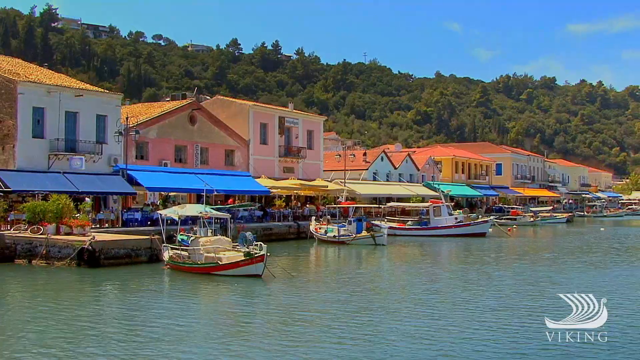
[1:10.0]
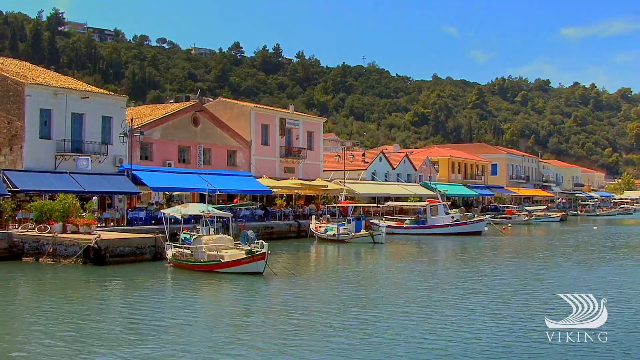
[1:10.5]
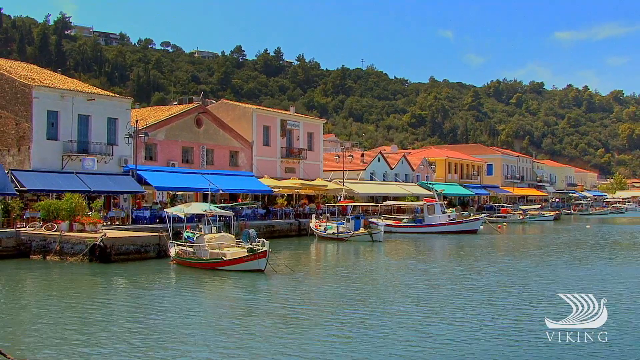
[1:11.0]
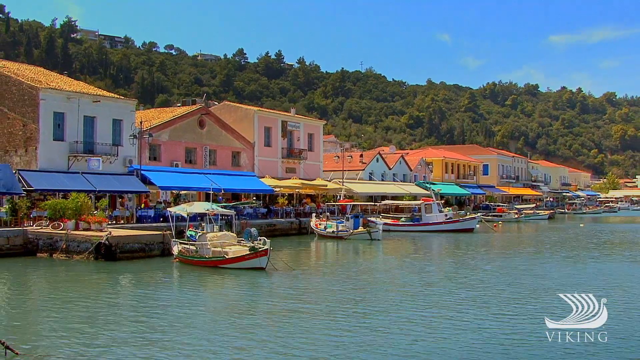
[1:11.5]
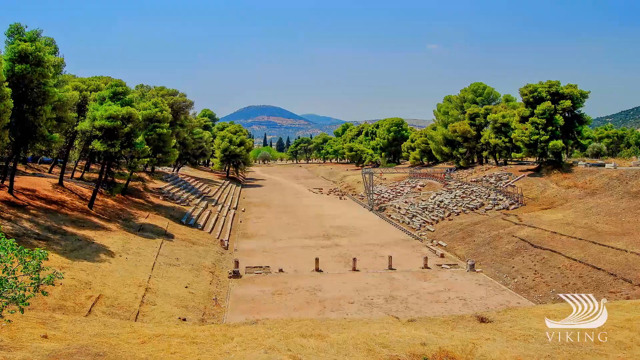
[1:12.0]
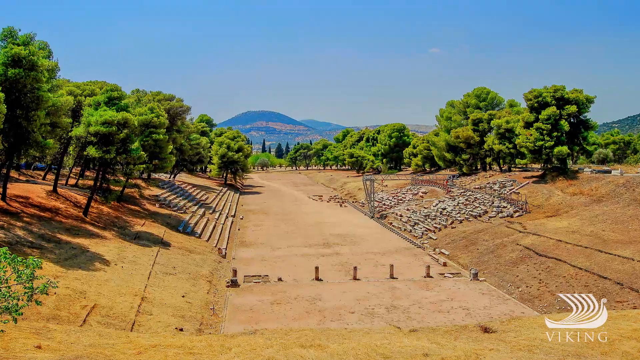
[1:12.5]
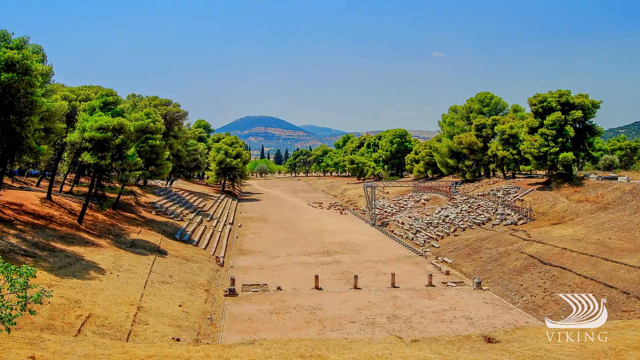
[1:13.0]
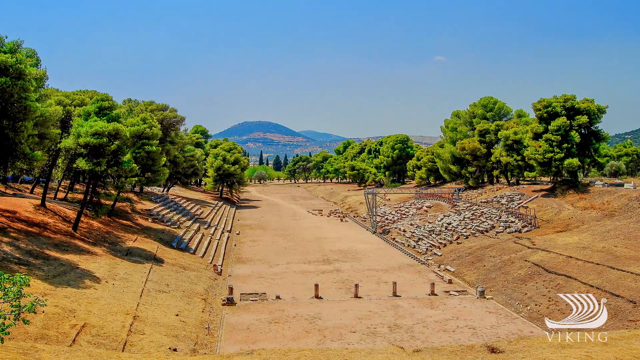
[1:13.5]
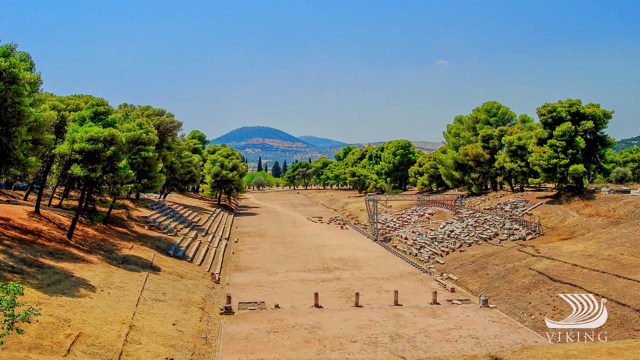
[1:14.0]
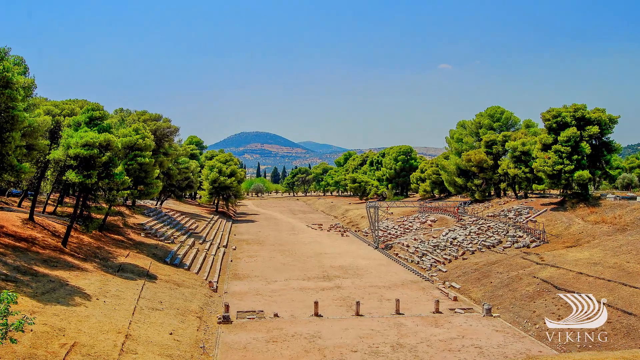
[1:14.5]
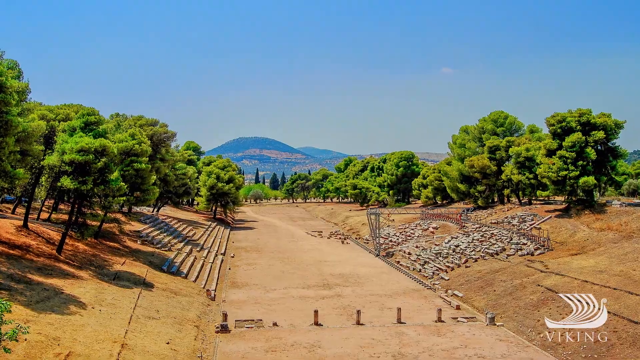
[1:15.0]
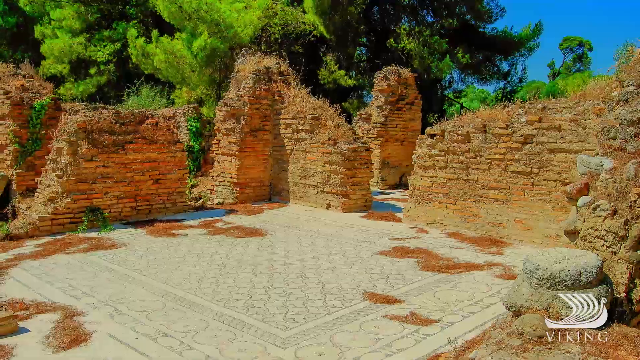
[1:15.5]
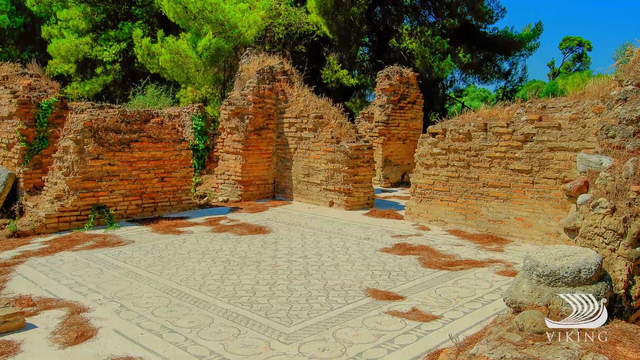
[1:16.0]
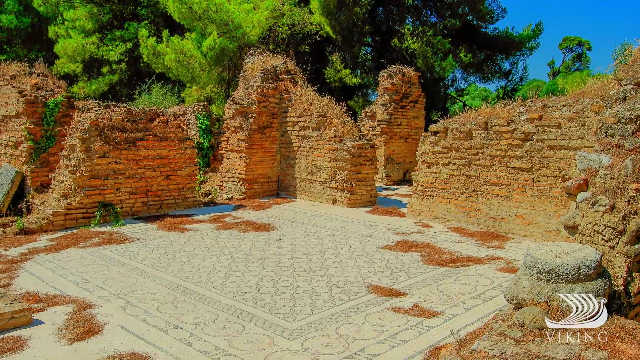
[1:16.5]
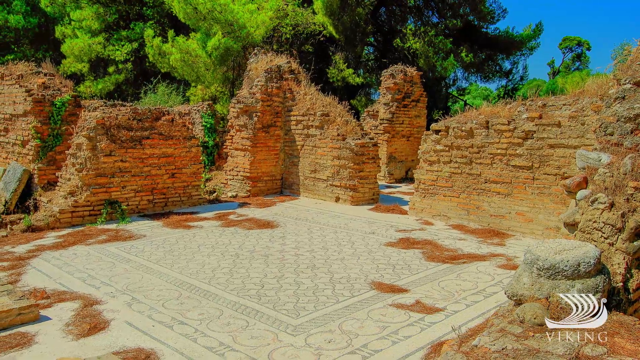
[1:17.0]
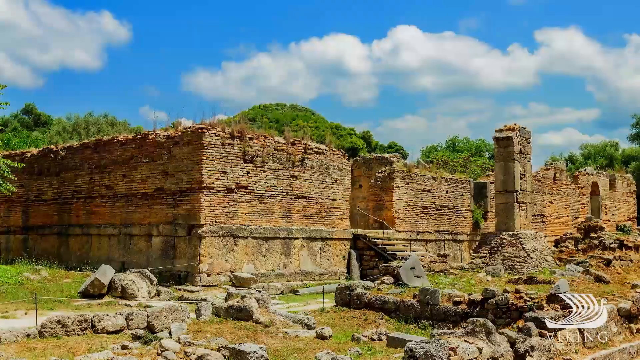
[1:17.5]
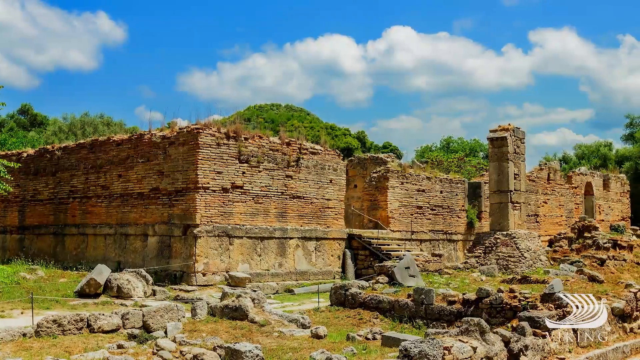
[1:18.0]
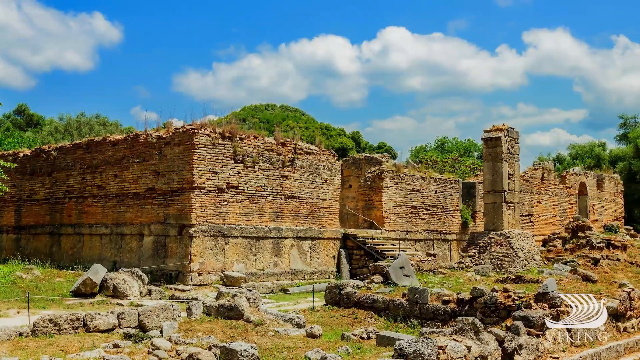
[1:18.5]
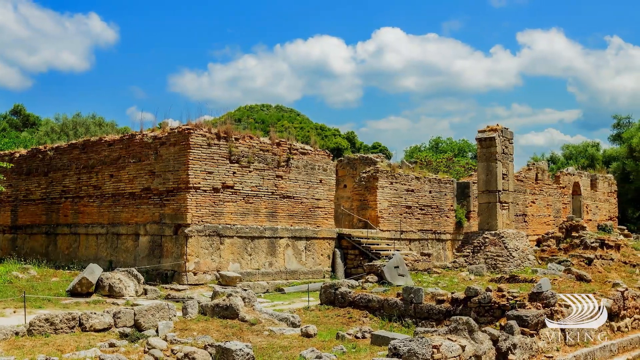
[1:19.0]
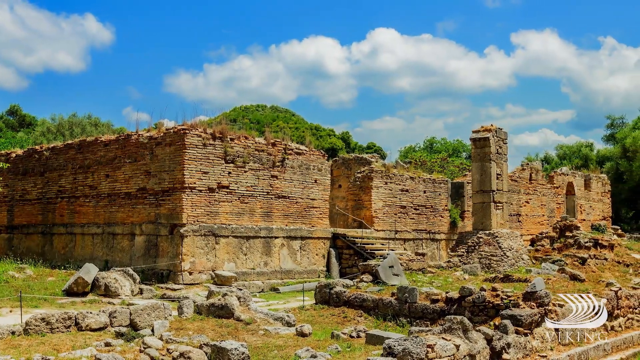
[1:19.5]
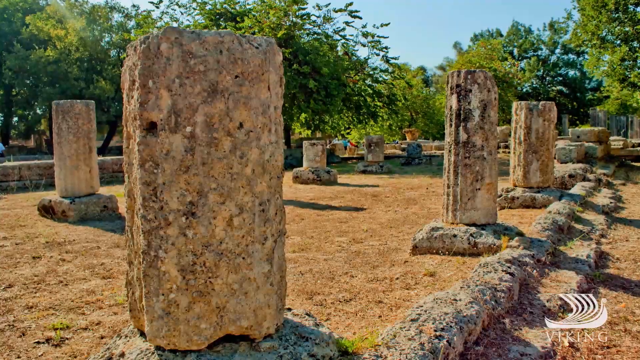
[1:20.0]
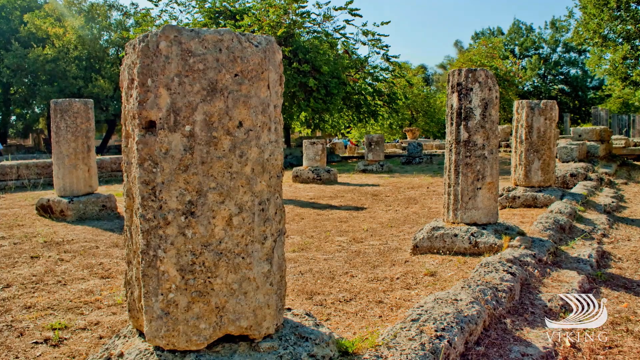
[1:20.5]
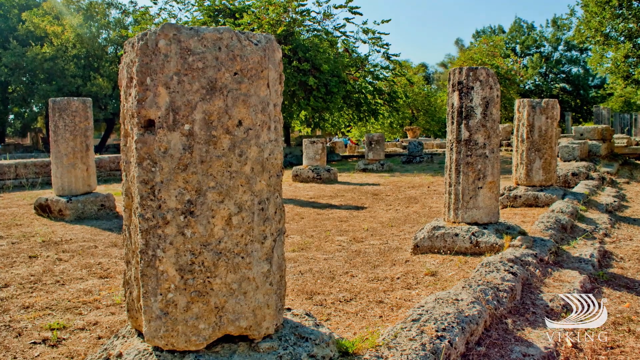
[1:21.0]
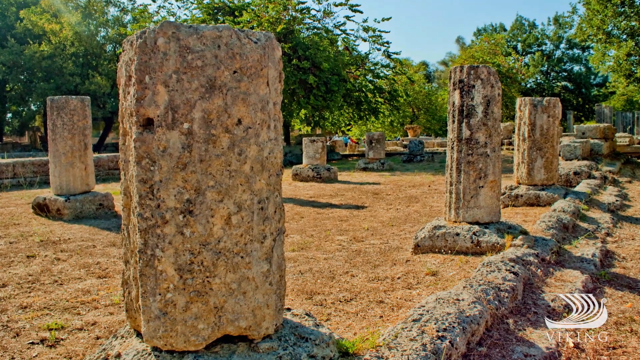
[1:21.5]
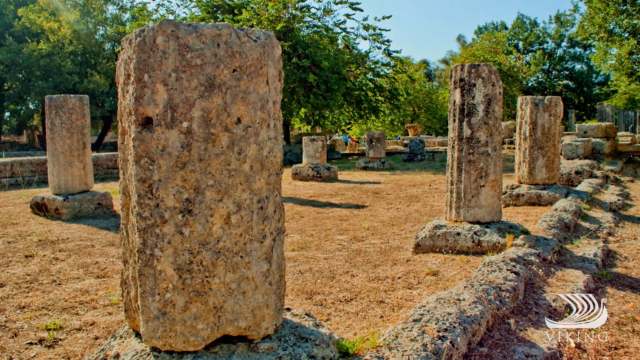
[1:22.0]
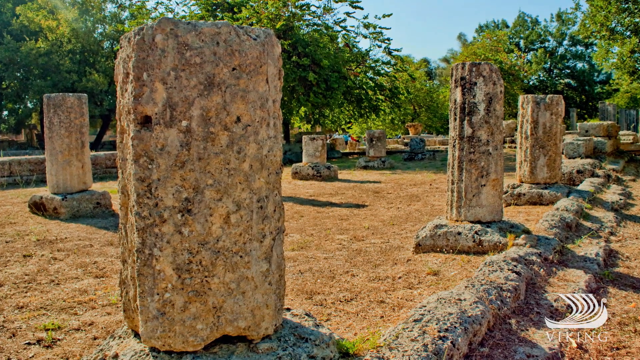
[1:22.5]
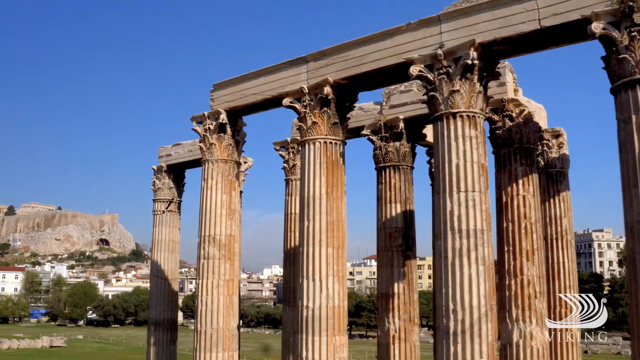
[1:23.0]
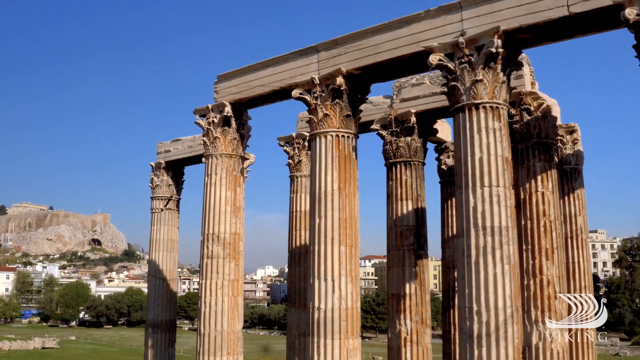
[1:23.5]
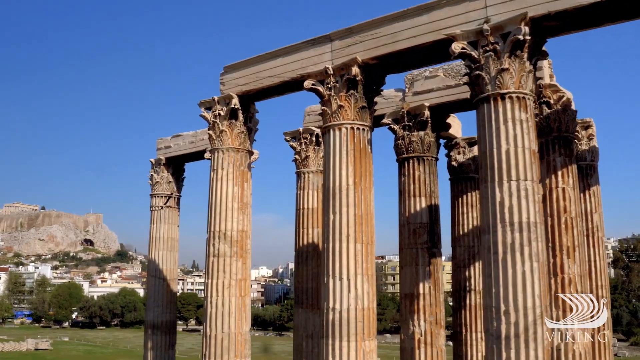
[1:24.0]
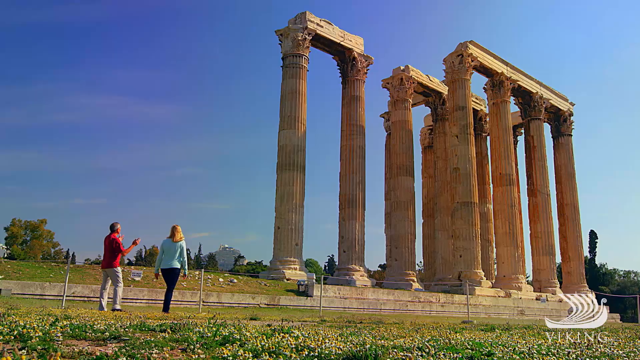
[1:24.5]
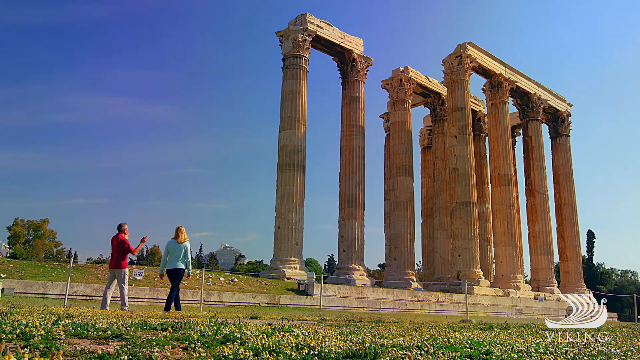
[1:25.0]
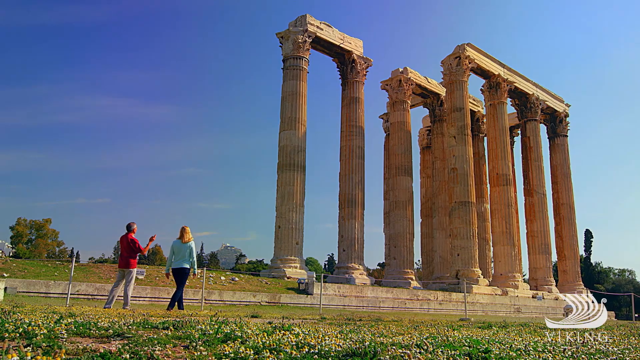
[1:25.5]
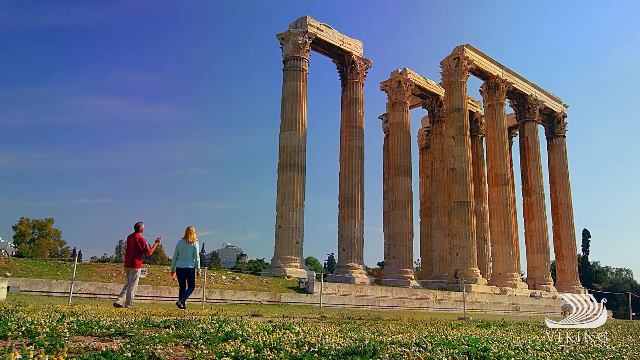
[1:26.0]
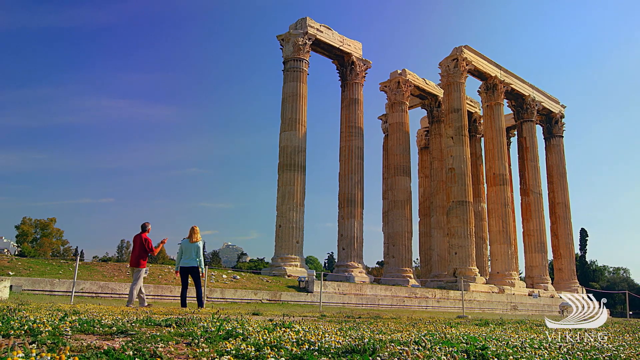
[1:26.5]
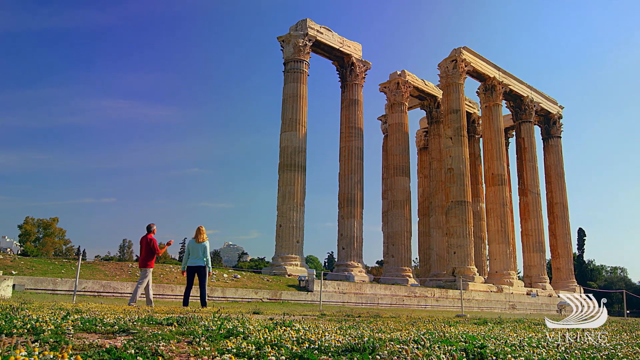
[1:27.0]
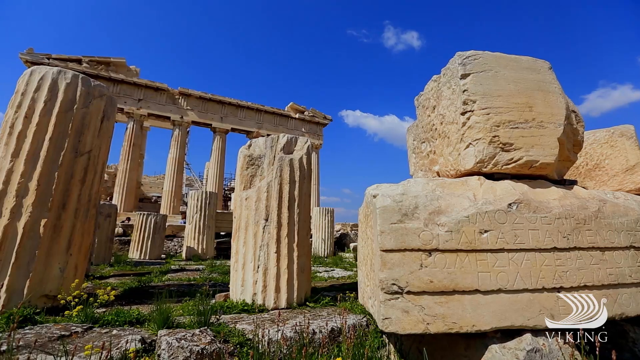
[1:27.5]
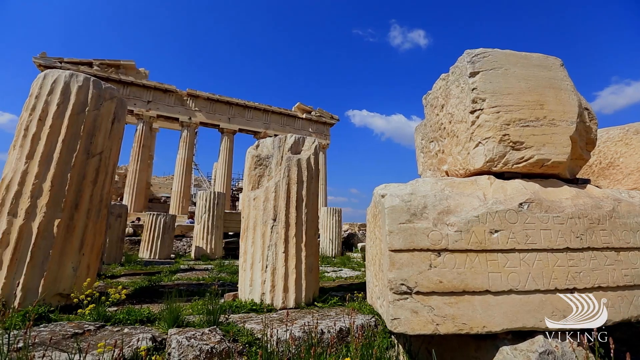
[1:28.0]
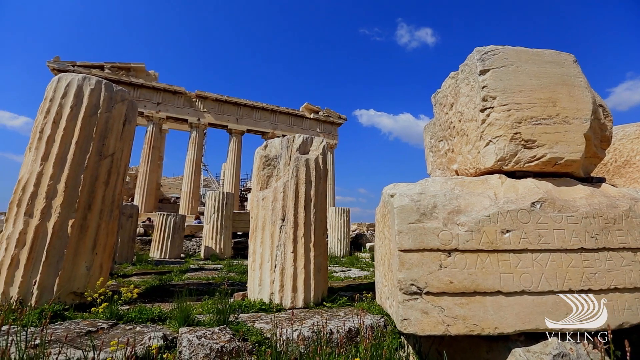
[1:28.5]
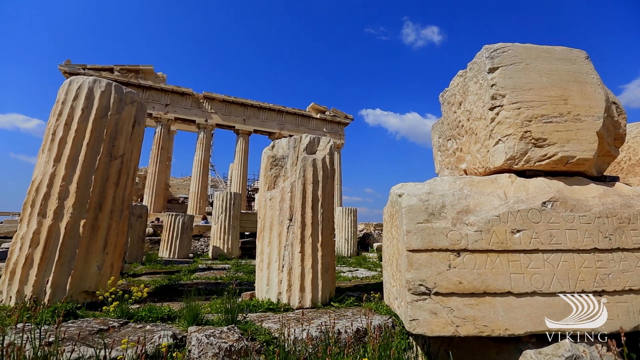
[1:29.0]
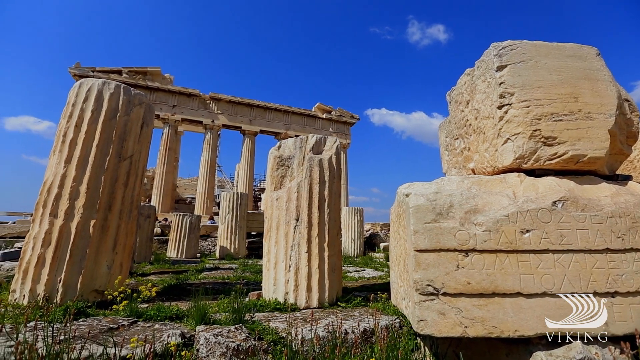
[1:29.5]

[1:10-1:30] A white Viking cruise logo, apparently present most of the time, shows a Viking ship silhouette with the word "Viking" underneath. The quick succession of photographs continues from the market to a view that almost looks like a winery, with green trees and brown dirt in the middle. Another view of the same setting shows what might be a monument with ruins: the remnants of ancient walls with a tiled floor, outdoors. An exterior view of it follows, apparently a much larger building with the top gone, leaving the foundation and a little wall. Next are what look like old tombstones in a courtyard, then an Acropolis-like columned structure in ruins. Another view shows two people walking at the base of the columned ruins, followed by another view of columned ruins. The view pans out to a wider shot of what looks like the Acropolis on the hill, with the Parthenon at the top, surrounding ruins, and houses in the valley.